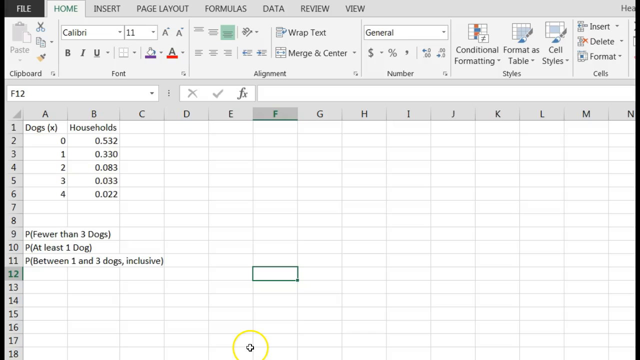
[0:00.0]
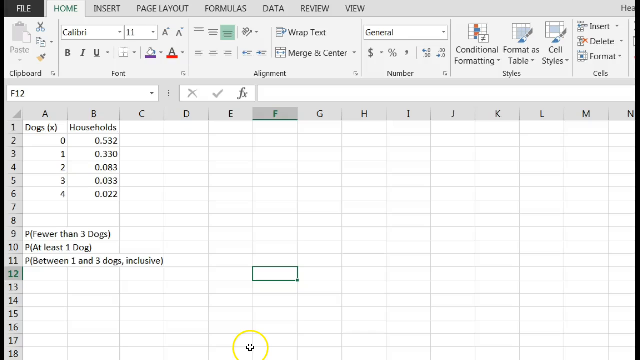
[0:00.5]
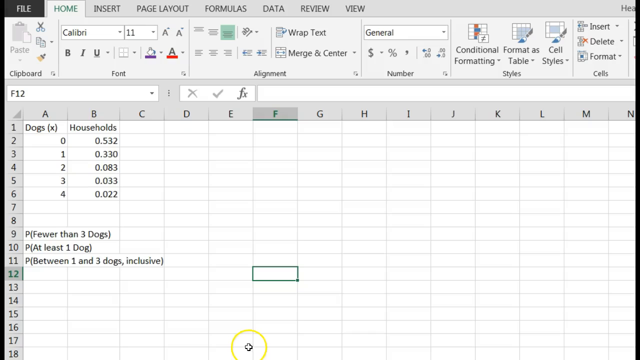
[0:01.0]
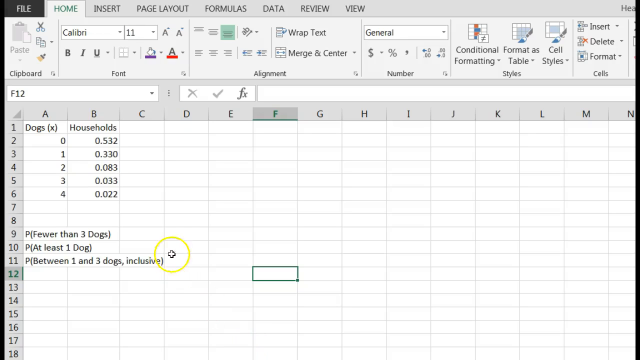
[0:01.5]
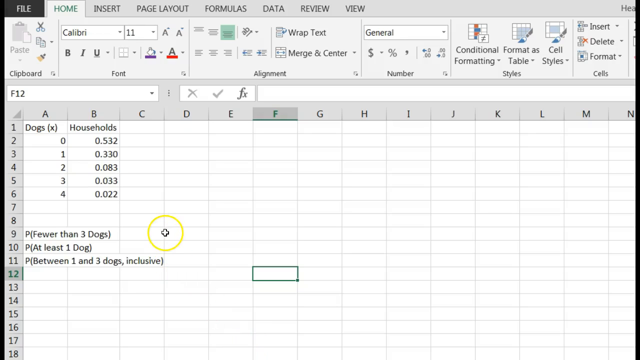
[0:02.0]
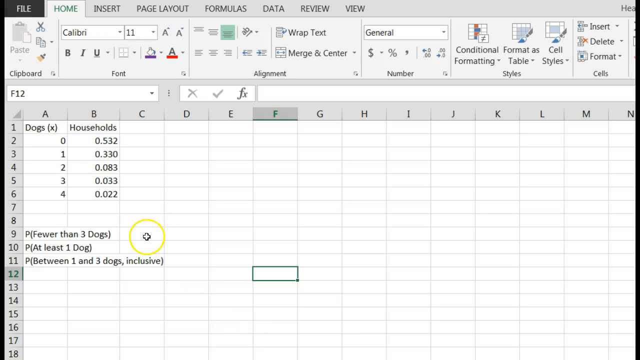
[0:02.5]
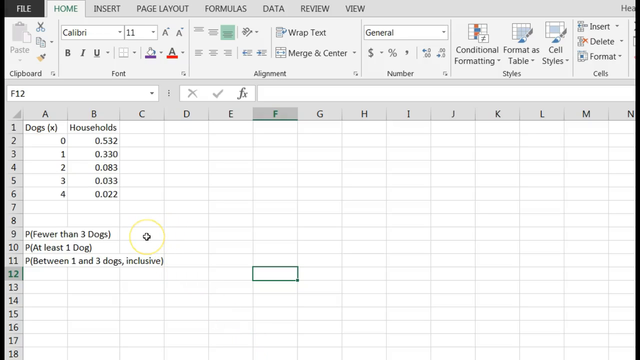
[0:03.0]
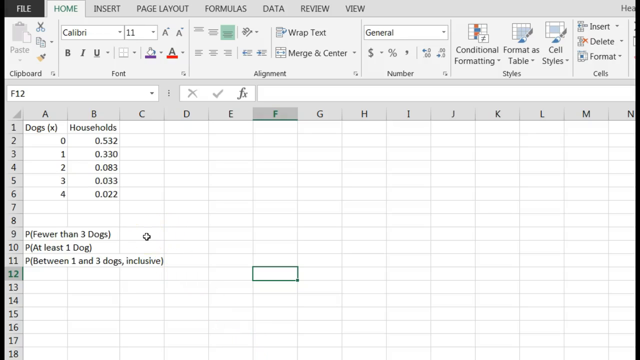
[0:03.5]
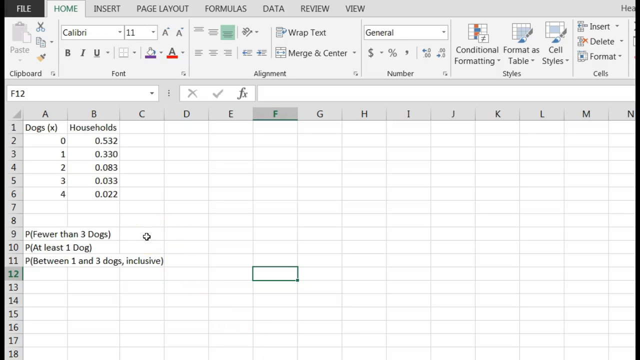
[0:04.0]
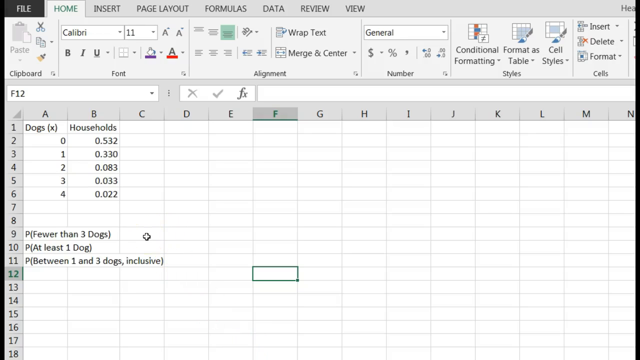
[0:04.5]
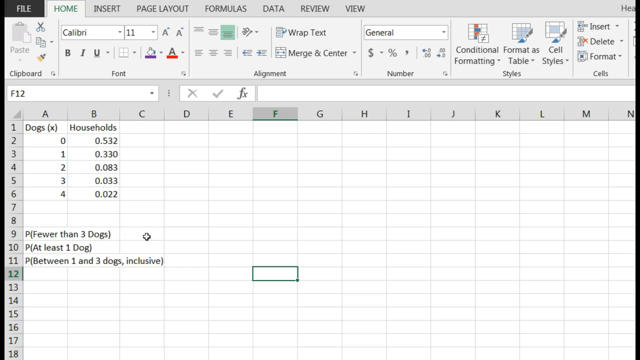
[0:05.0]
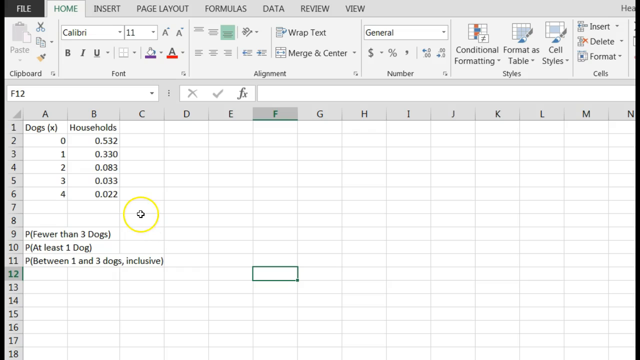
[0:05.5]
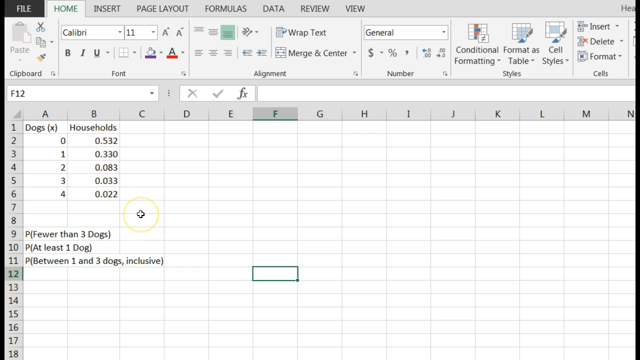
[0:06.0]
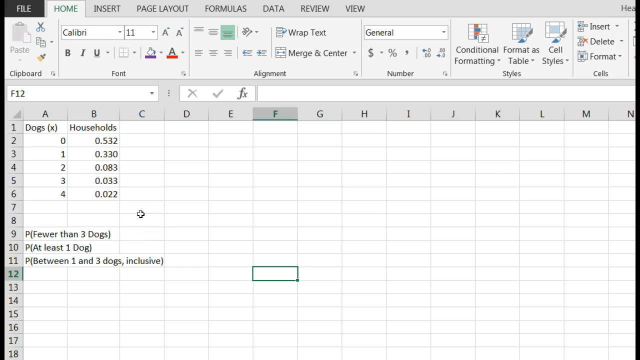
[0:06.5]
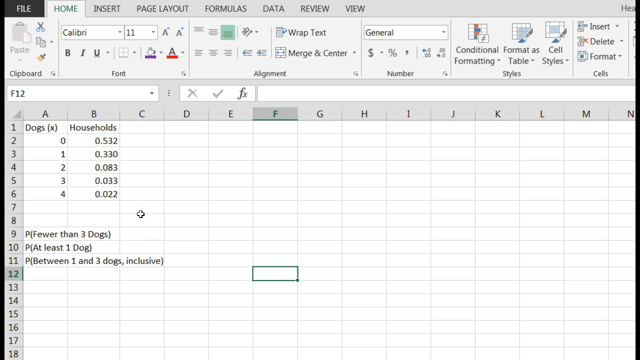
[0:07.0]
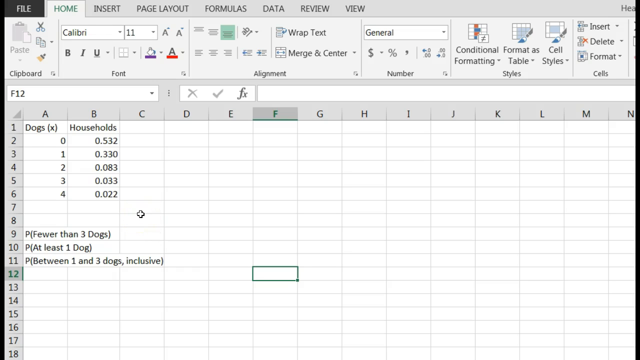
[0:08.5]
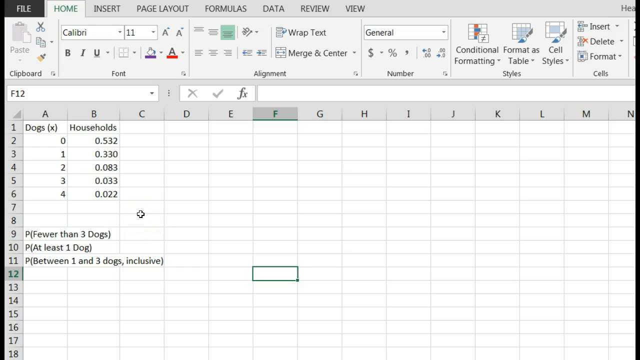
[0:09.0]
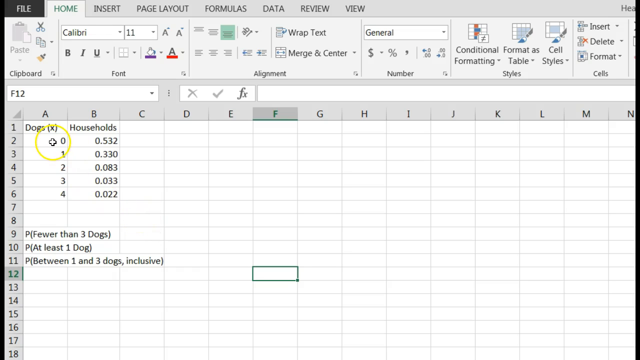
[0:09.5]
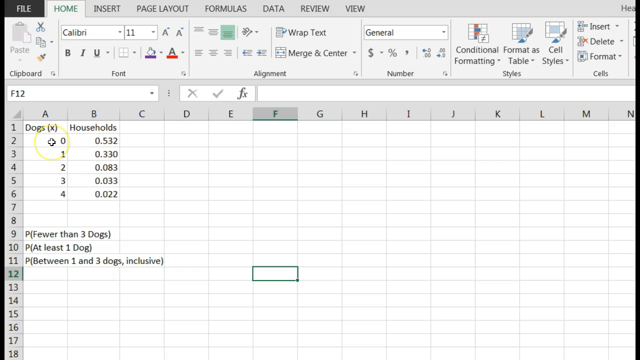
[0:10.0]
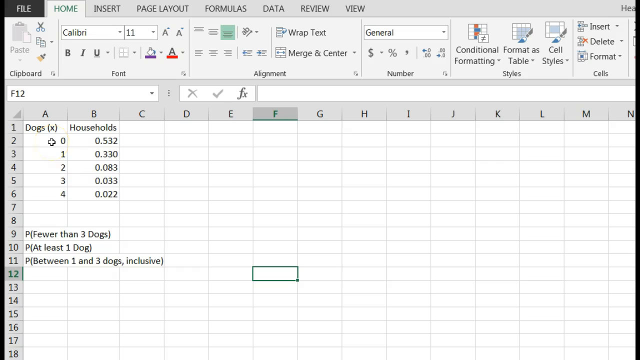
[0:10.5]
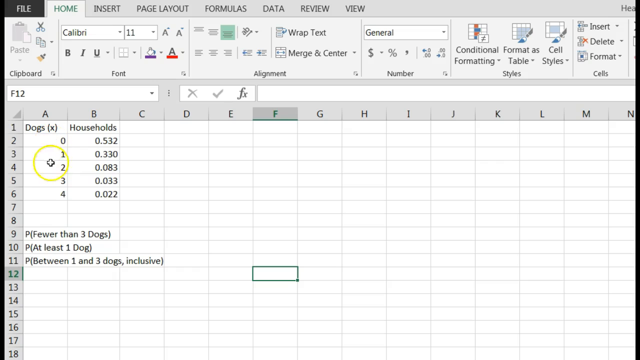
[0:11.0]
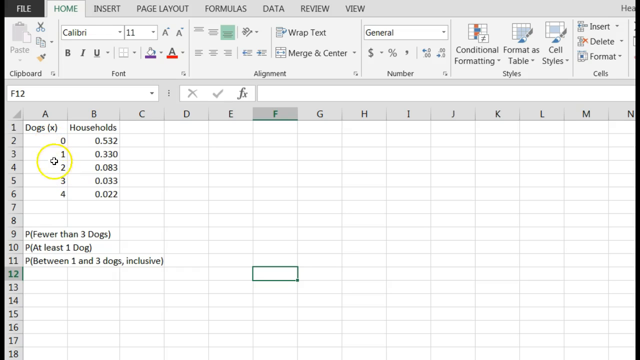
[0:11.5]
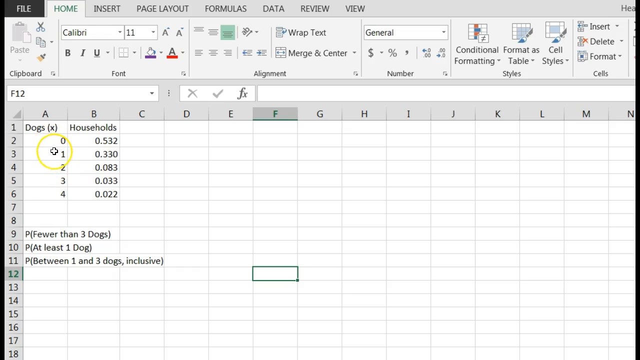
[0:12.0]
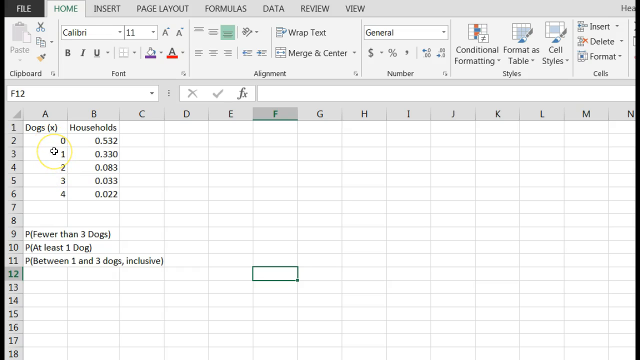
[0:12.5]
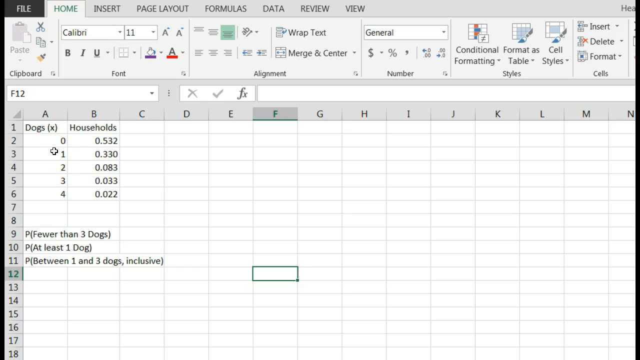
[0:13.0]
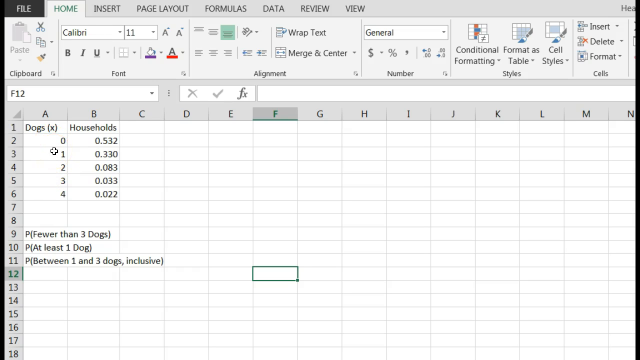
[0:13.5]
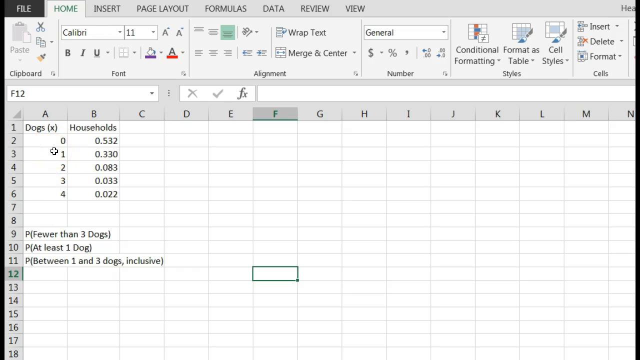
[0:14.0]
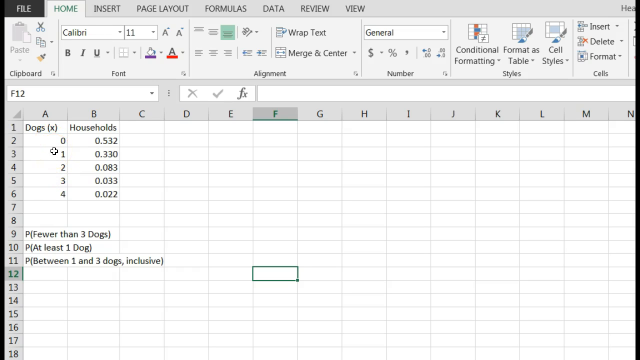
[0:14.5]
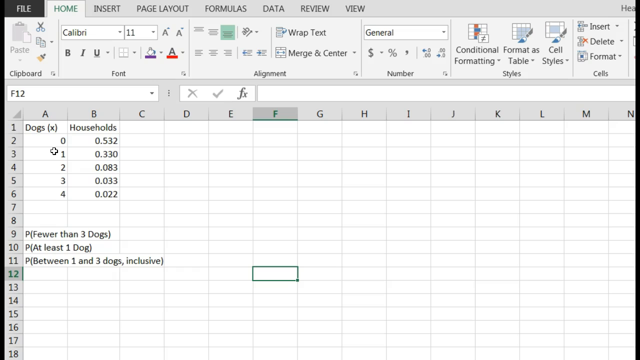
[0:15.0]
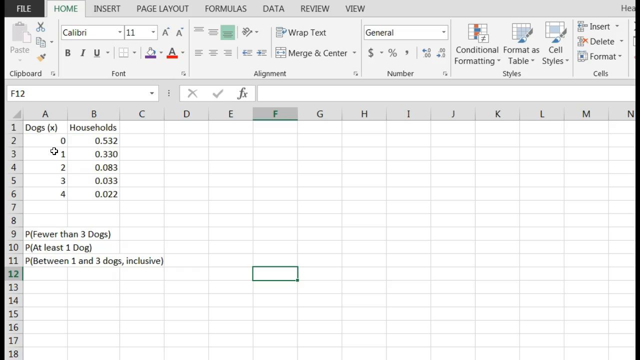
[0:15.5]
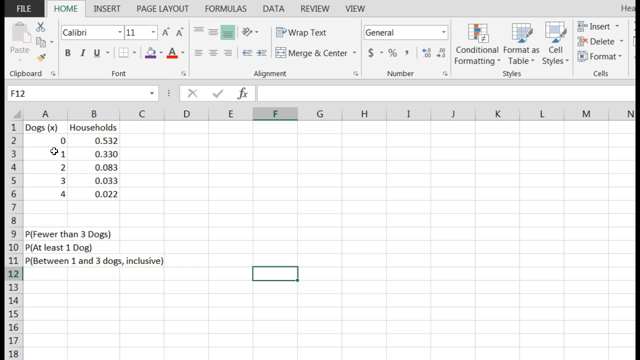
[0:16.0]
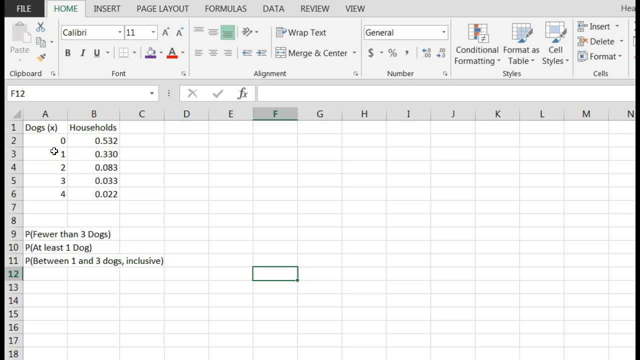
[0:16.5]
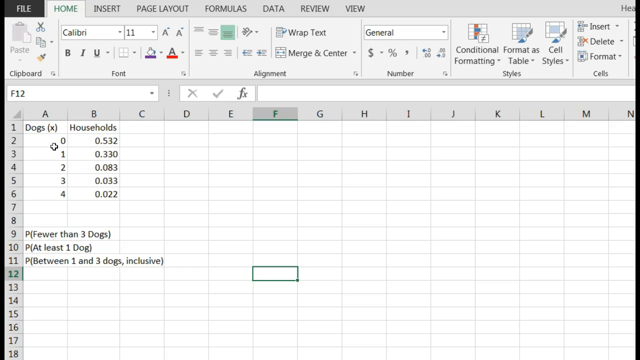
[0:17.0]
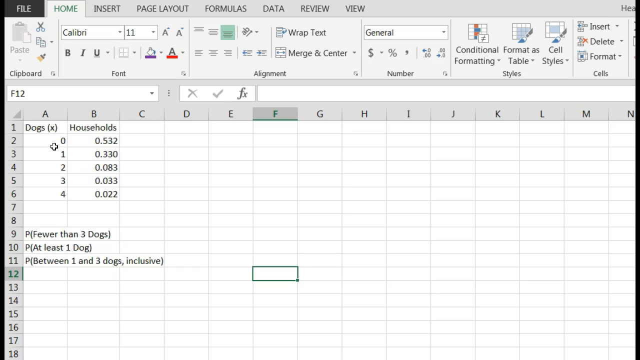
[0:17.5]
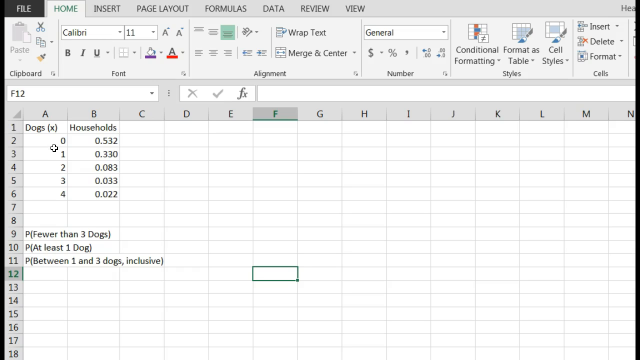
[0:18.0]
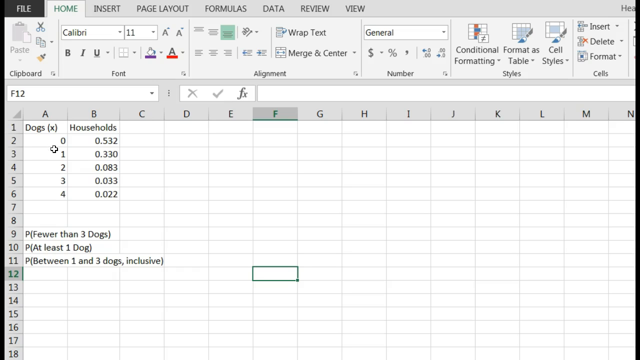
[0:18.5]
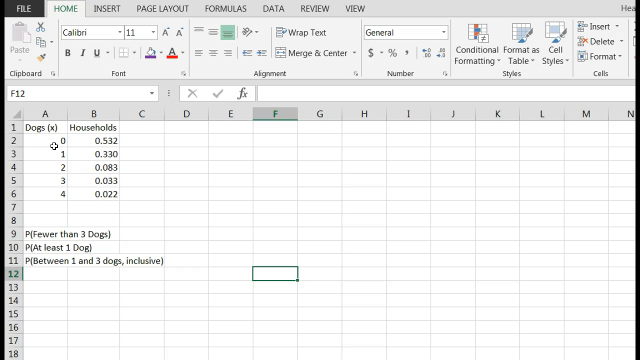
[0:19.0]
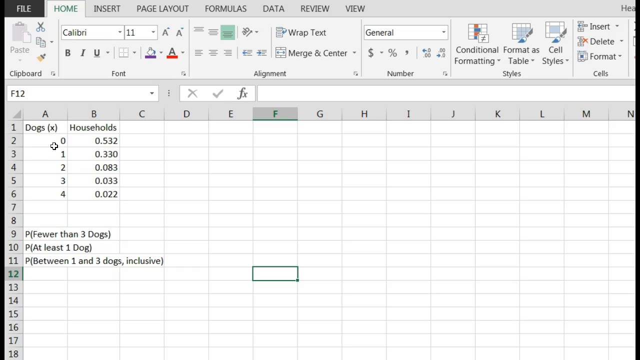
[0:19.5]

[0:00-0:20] An Excel spreadsheet is open on the Home tab, which appears in green at the top while the other tabs are black. To the left is File, in a black box with white writing. Below, columns A and B hold the data: column A is headed "Dogs" with a capital D, followed by an X in parentheses, and beneath it A2 is 0, A3 is 1, A4 is 2, A5 is 3 and A6 is 4. Column B to the right is headed "households" and lists a series of decimals, including 0.532. A7, A8, B7 and B8 are blank. Below that, A9 reads P "fewer than three dogs", A10 reads P "at least one dog", and A11 reads "between 1 and 3". Cell F12 appears to be selected, marked by a green border. The cursor is a plus sign, and when it moves there is something like a yellow circle around it. It stops at C9, then moves between C7 and C8, and moves between the numbers under Dogs as well.